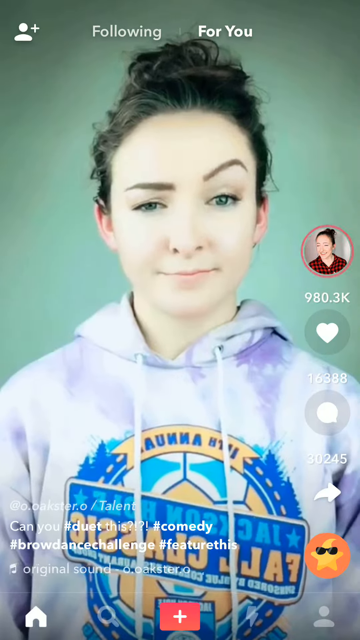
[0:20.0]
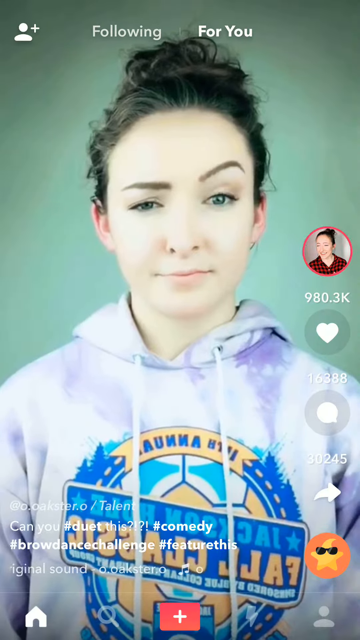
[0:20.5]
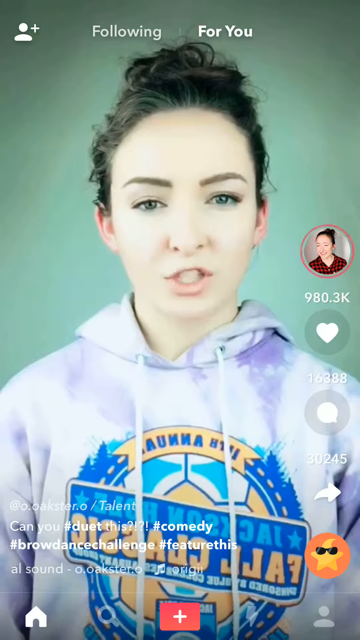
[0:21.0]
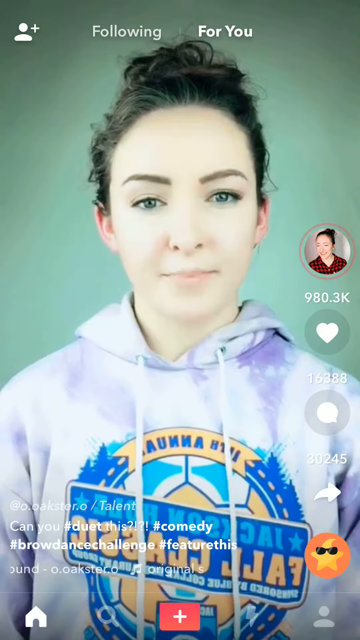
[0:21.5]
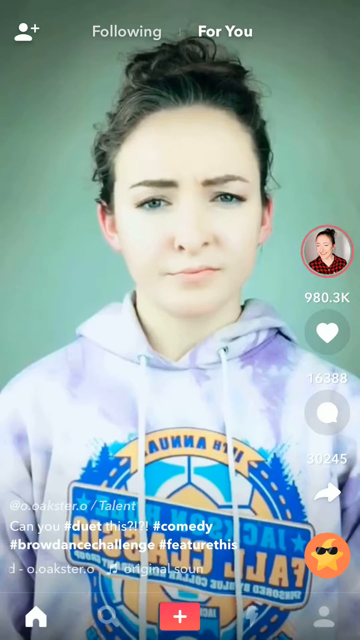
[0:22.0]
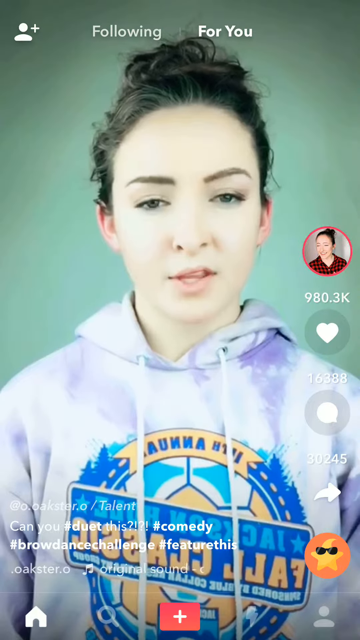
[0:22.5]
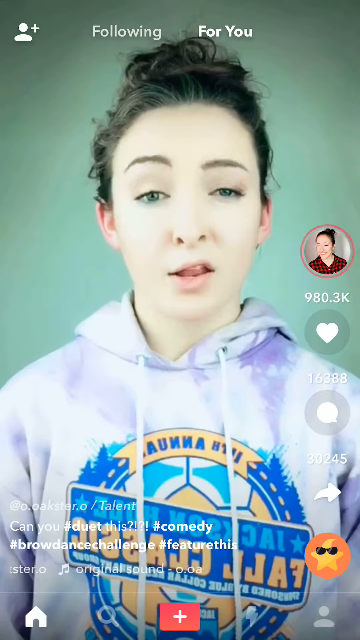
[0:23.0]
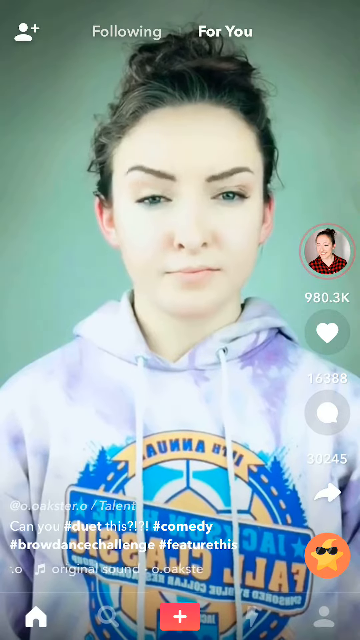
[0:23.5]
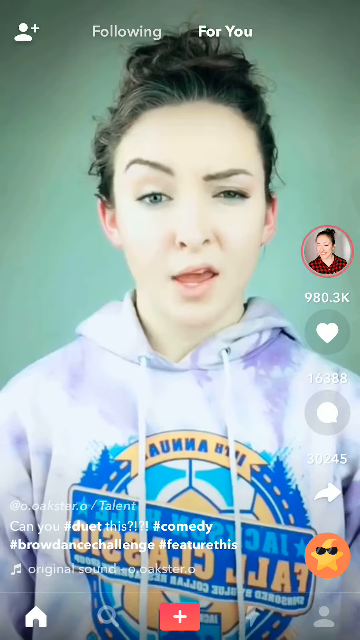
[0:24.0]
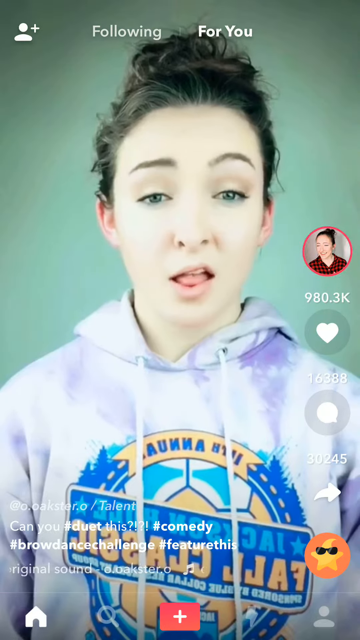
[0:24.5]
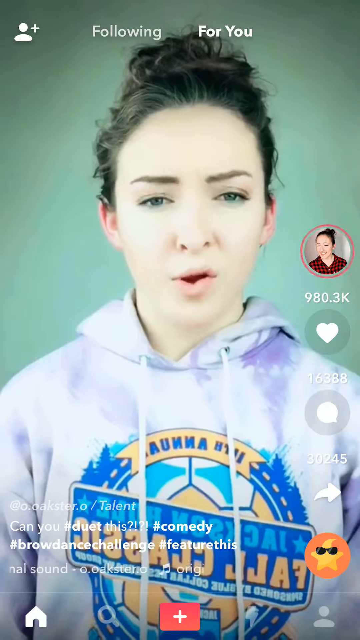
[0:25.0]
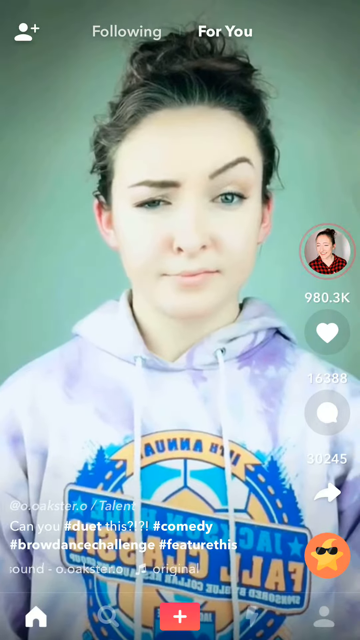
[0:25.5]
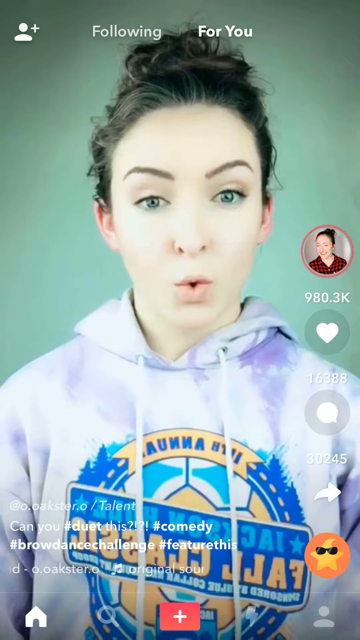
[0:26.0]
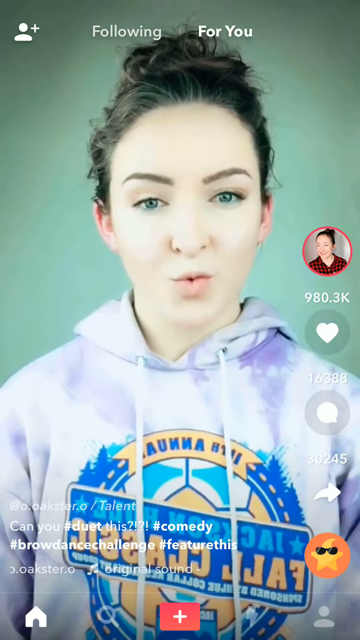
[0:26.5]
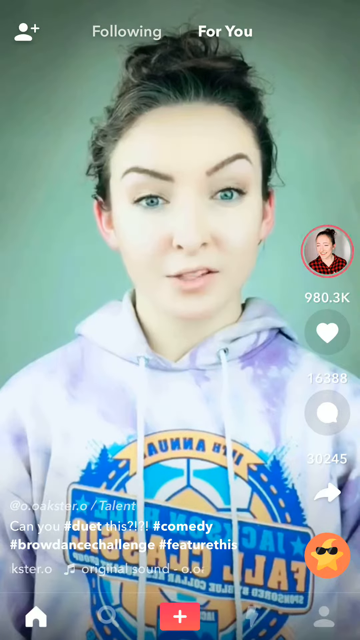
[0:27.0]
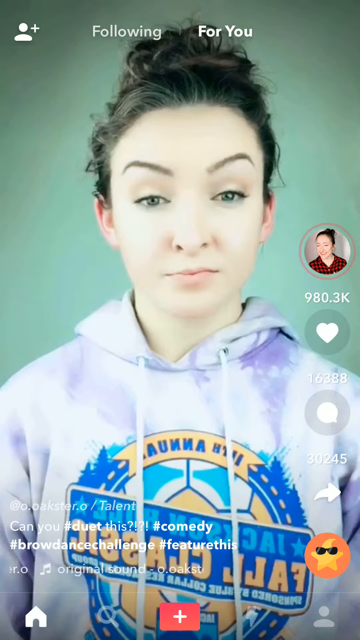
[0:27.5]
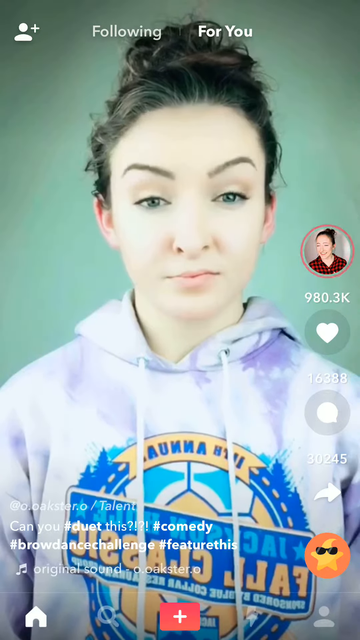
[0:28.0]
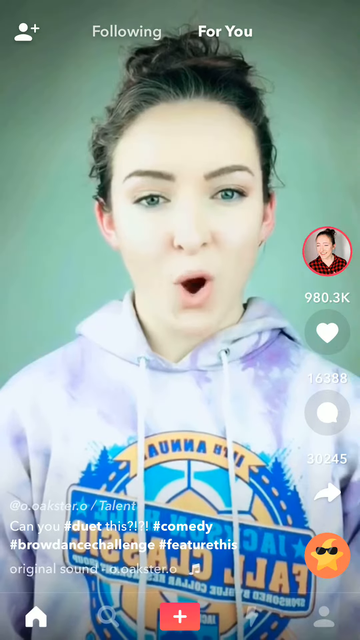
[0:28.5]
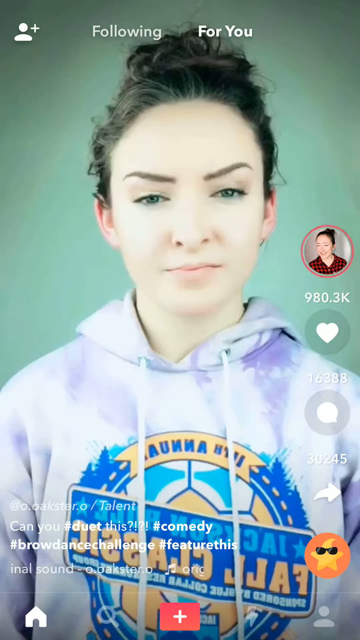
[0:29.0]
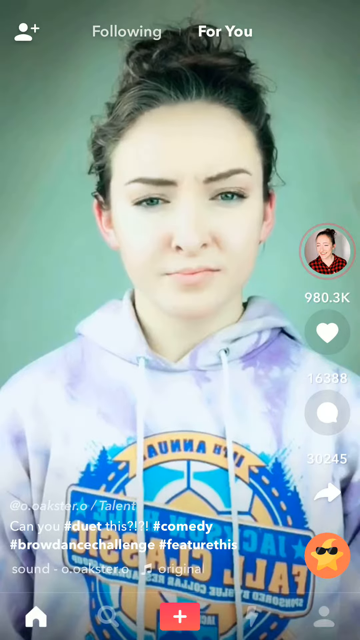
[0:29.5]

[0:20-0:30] The app, which resembles TikTok but is called Musically, shows a woman with pale skin and black hair in a bun. She is rolling her quite thick eyebrows, rolling them all in unison, while speaking to the camera. She wears a hoodie that says "Fall Classic". The video appears to have 980,000 likes, 16,000 comments and 30,000 shares. At the bottom is a caption reading "#Comedy, #Brow Dance Challenge, #Future".